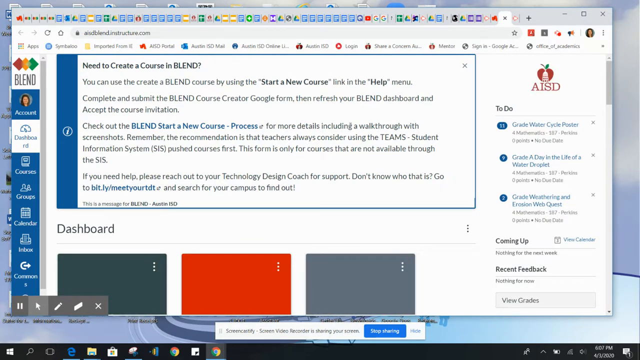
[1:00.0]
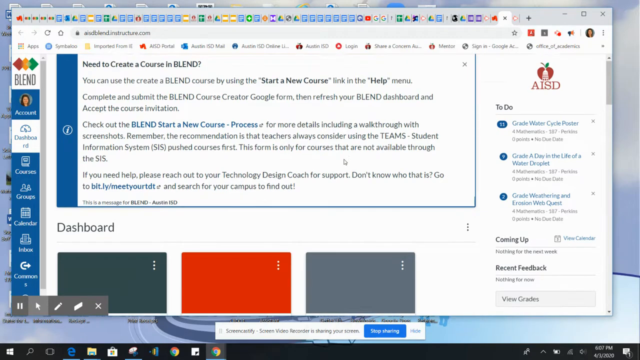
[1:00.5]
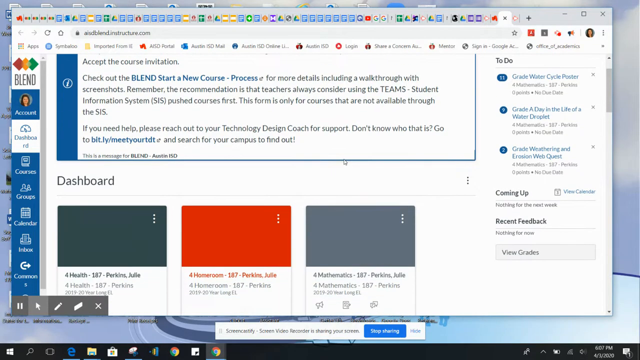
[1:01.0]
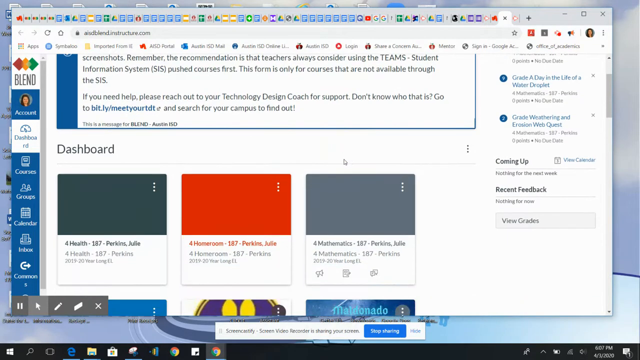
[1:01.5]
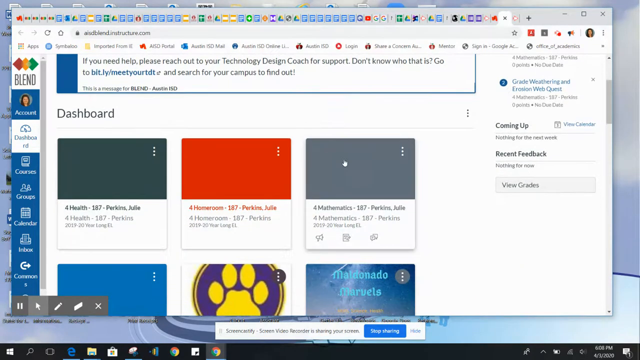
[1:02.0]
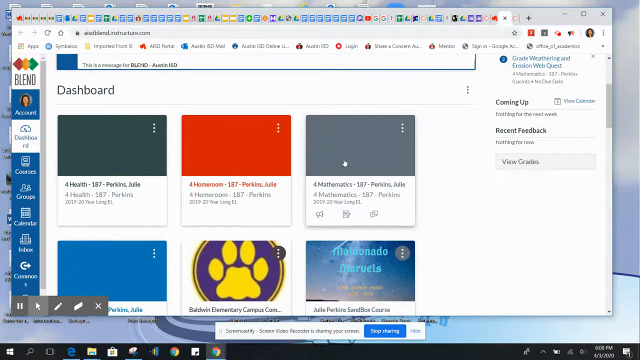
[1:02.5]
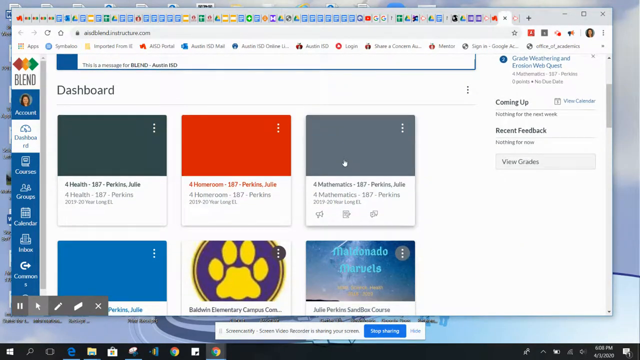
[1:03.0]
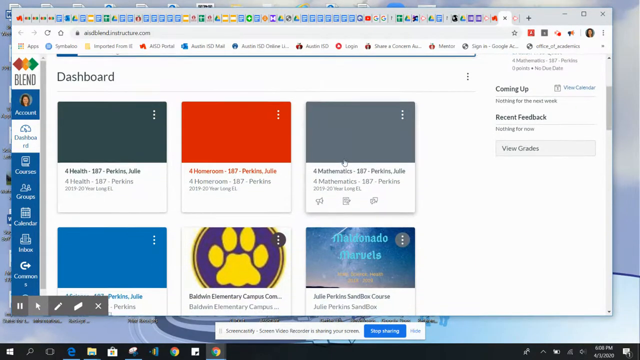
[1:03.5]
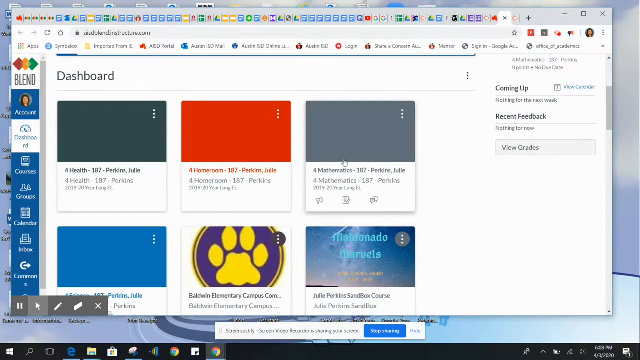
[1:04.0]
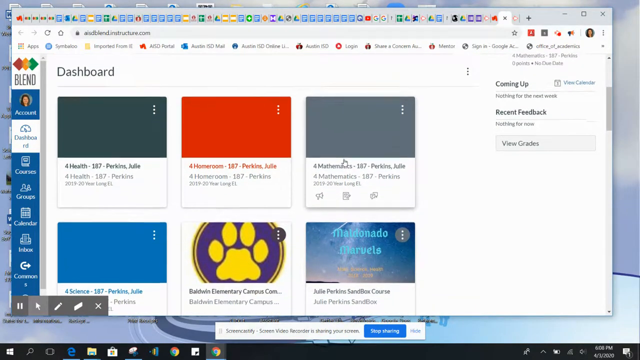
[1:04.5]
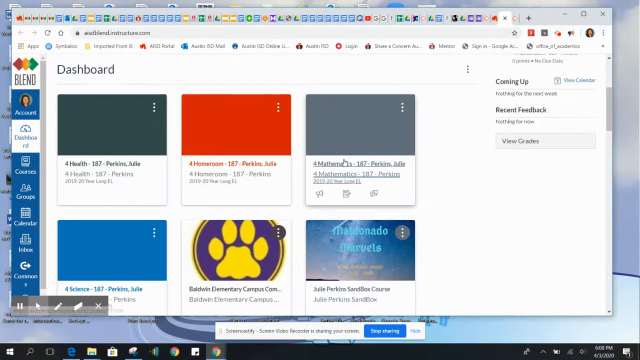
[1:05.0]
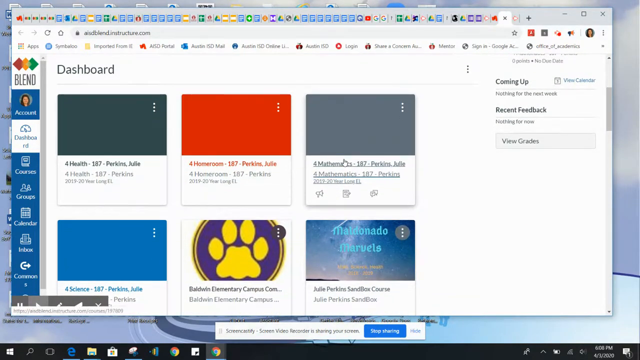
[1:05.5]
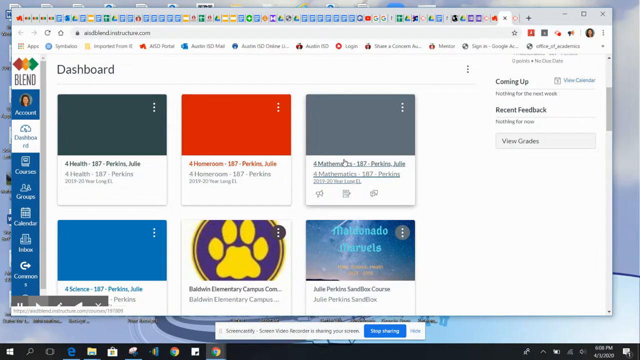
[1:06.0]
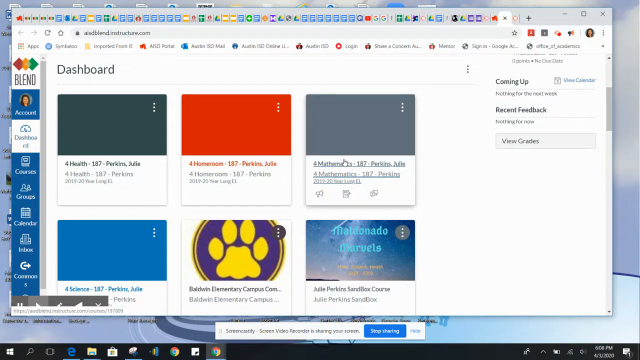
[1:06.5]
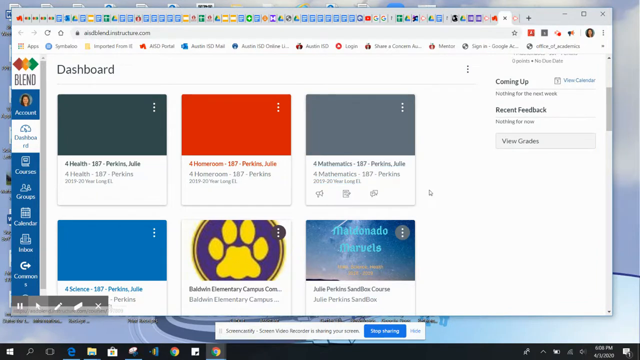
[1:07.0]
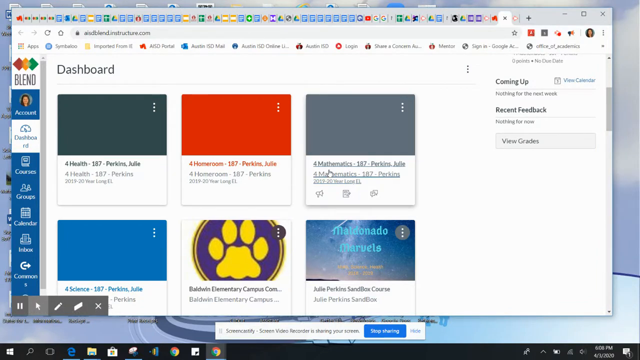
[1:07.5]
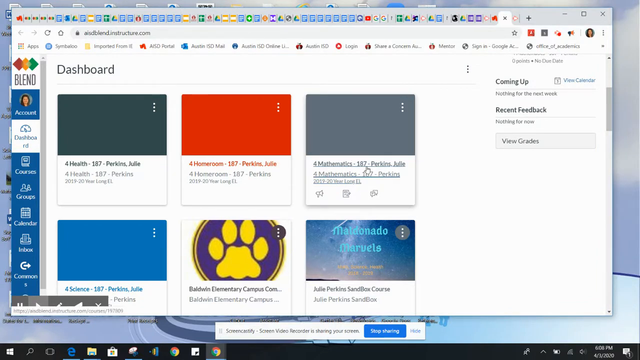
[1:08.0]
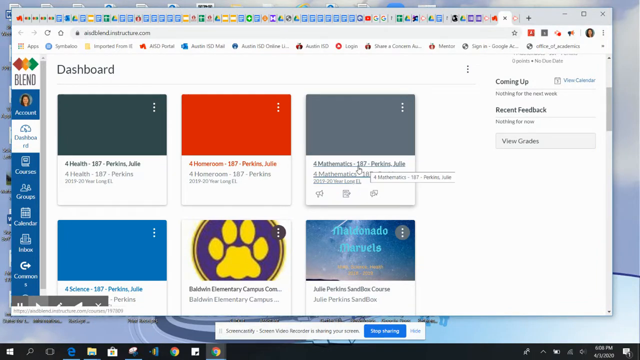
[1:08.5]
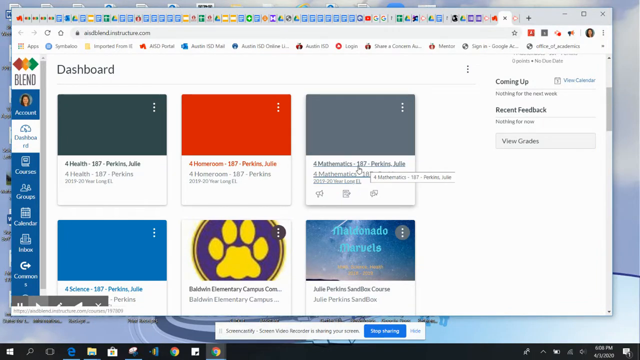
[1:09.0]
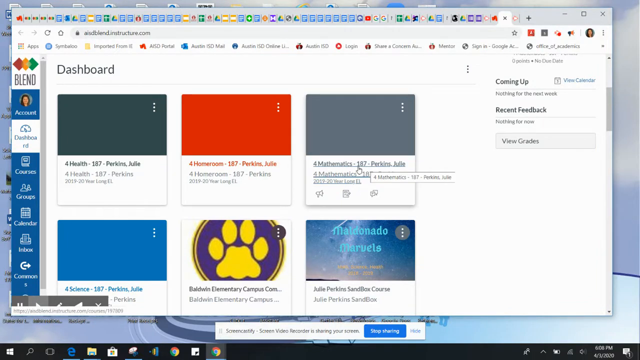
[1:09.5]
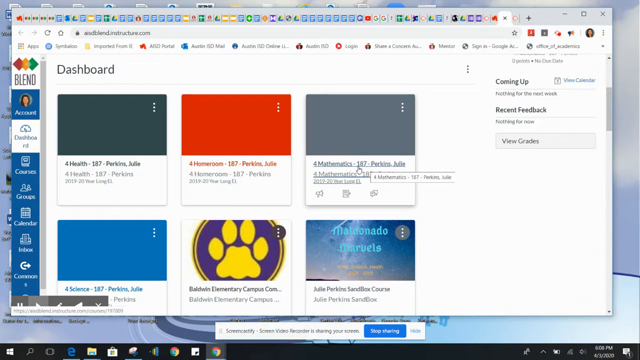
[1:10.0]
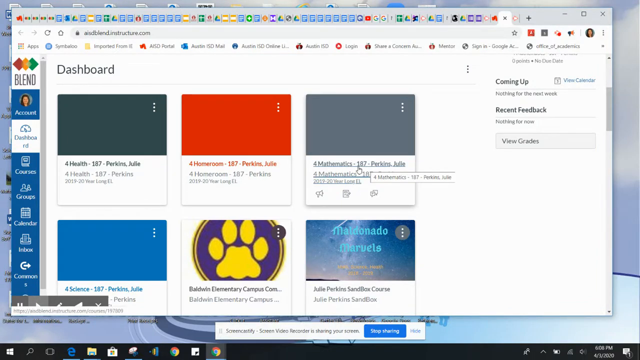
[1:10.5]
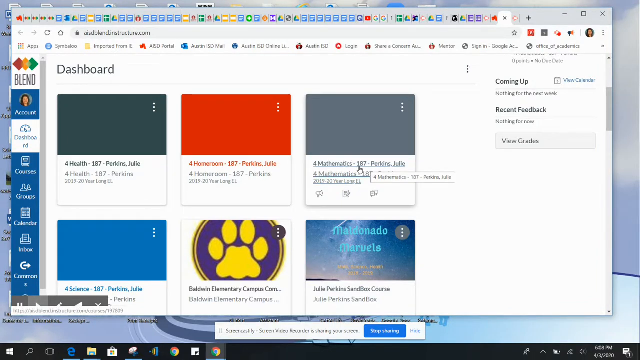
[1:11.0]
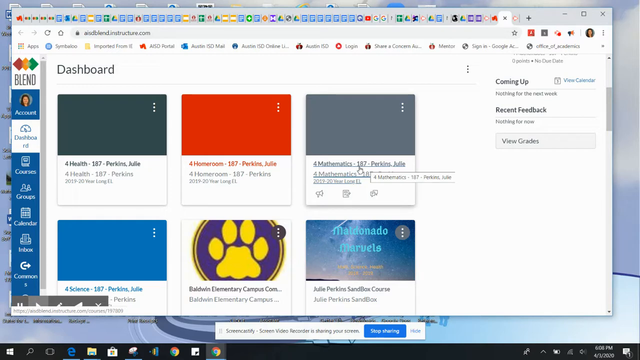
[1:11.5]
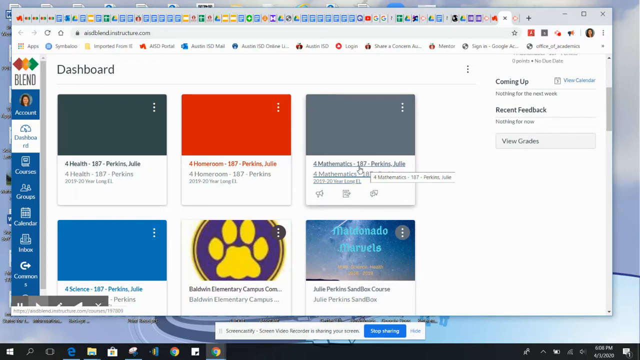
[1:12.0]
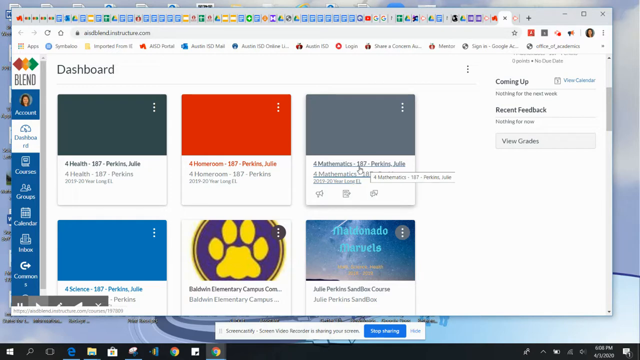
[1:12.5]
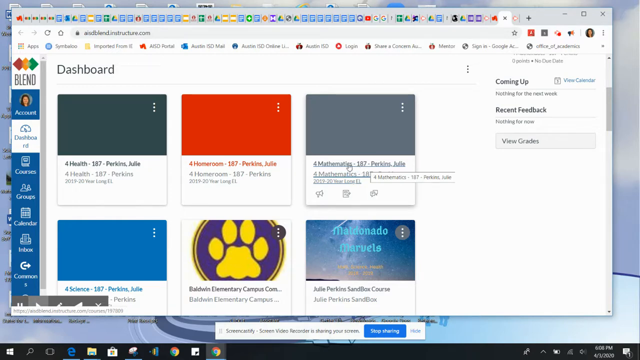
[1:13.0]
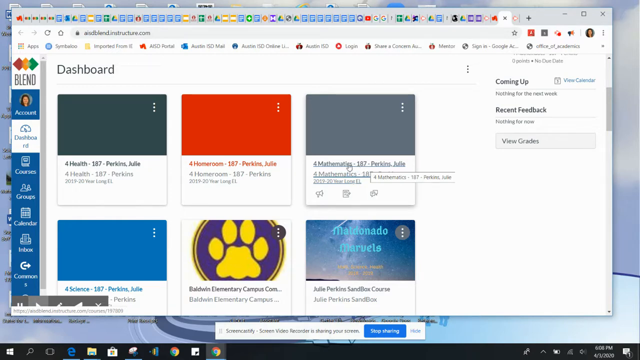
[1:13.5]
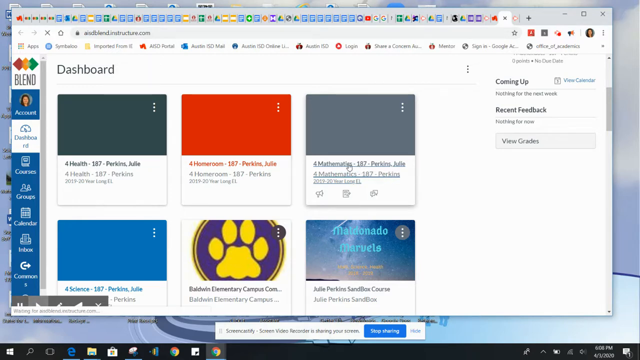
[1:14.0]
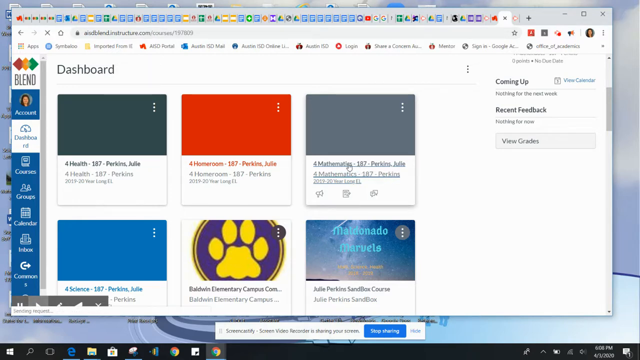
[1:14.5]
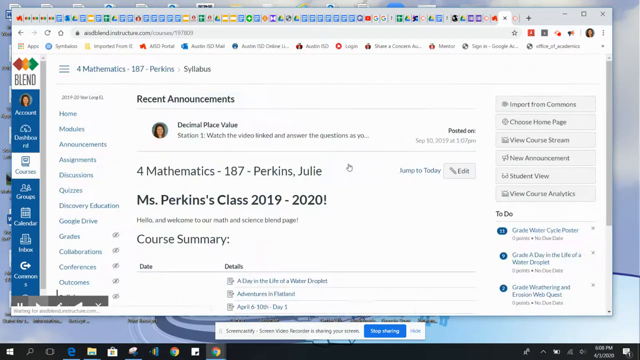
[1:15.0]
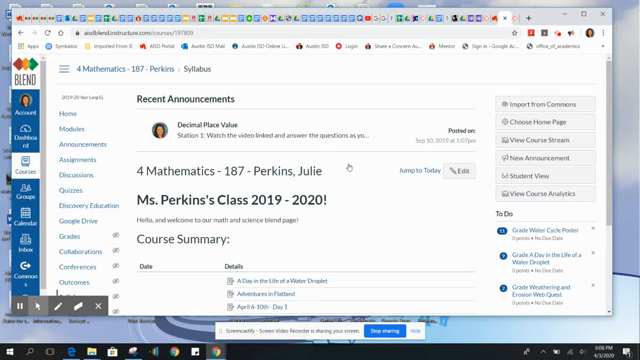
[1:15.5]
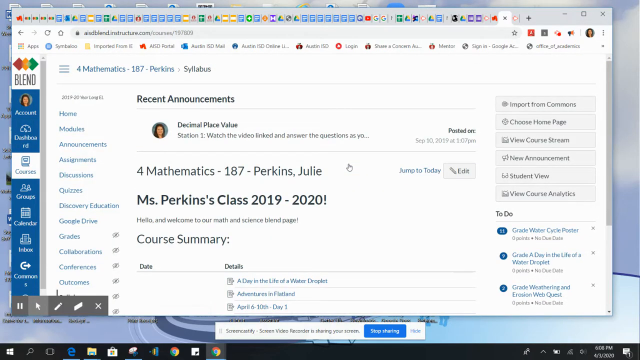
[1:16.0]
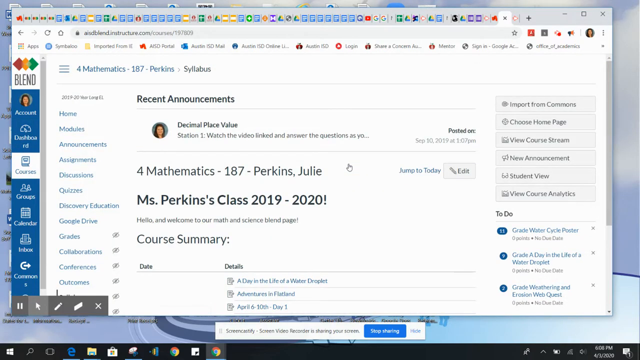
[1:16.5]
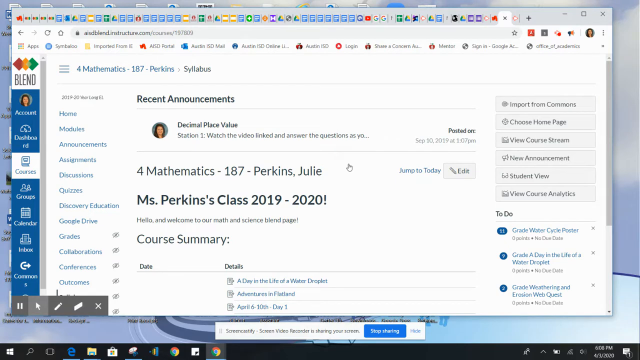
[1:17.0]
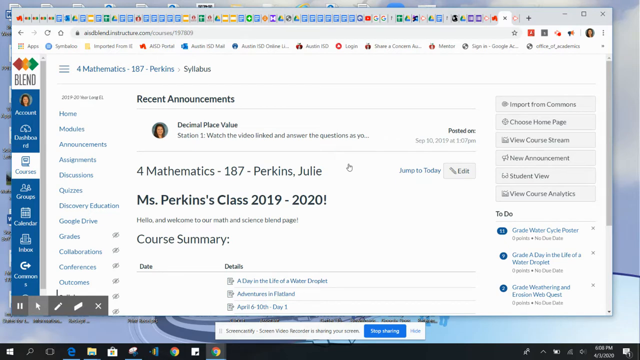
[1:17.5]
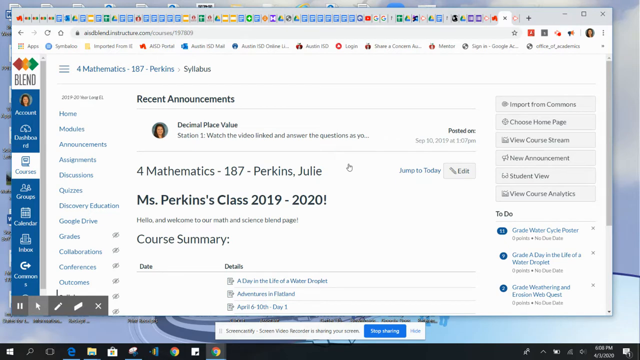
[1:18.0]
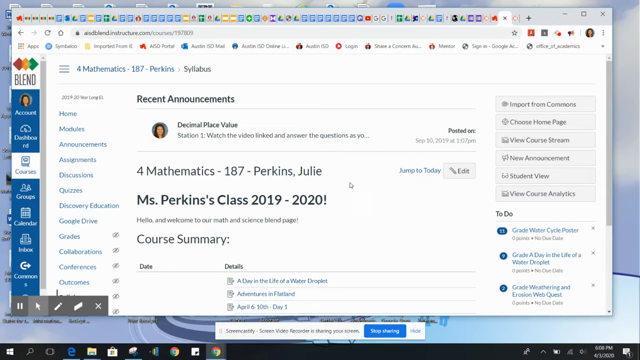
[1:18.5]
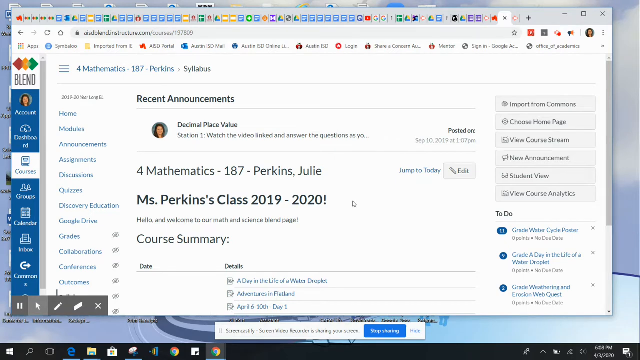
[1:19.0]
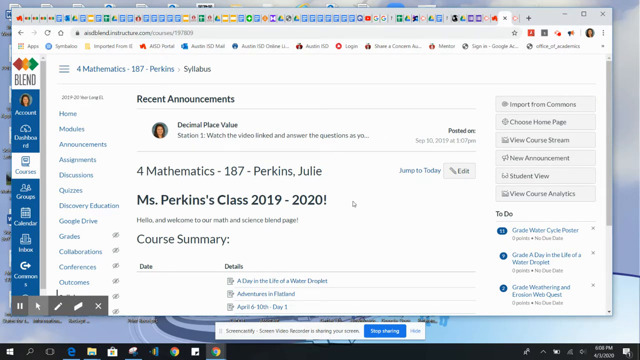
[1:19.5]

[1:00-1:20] Still on the dashboard tab on the left, the user scrolls down past the opening message. Below, it says "dashboard", and there are rows and columns of items, three items per row, with two columns visible so far while scrolling. They appear to be different classes: from left to right, 4 Help, 4 Homerooms, and 4 Mathematics, and below that 4 Science, Baldwin Elementary campus, and Julie Perkins Sandbox course. Hovering over the mathematics course highlights it and shows its name and some other information. The user clicks on the mathematics course, whose full name is "4Mathematics-187-Perkins, Julie", and the page says "Ms. Perkins class 2019-2020". There is a course summary showing date details next to some documents, with three documents visible so far. On the right side are many options, such as import from Commons, choose home page, view course stream, new announcements, student view, and view course analytics, which look like teacher-only options. On the left are Home, Modules, Announcements, Assignments, Discussions, Quizzes, Discovery Education, Google Drive, Grades, Collaboration, Conferences, and Outcomes, with a couple more options not visible. From Grades down there is an idle icon, so it seems these items can be made visible or not.